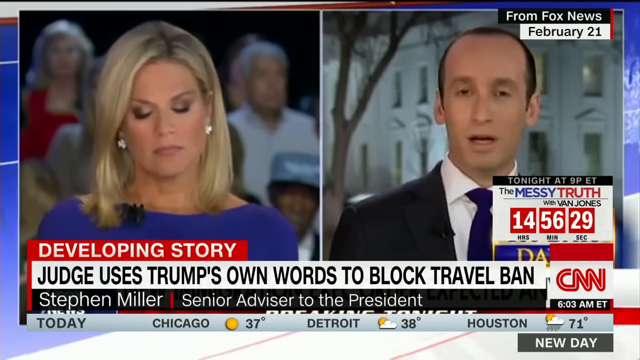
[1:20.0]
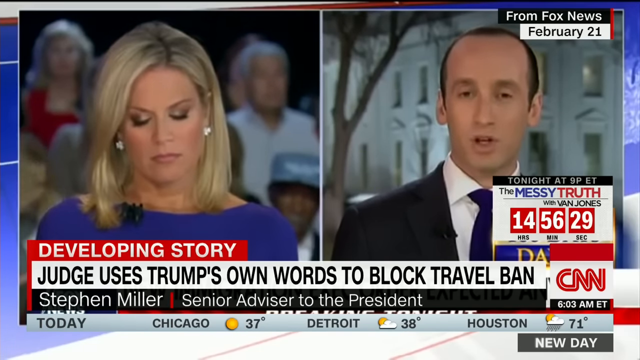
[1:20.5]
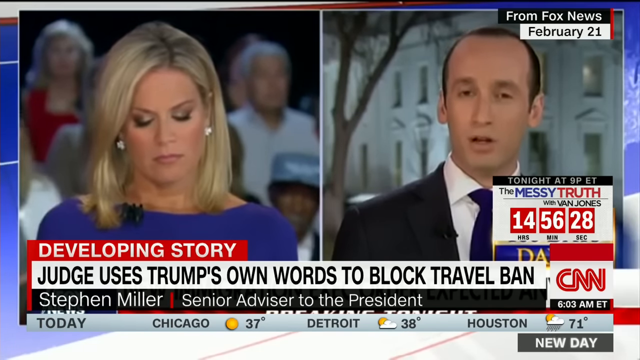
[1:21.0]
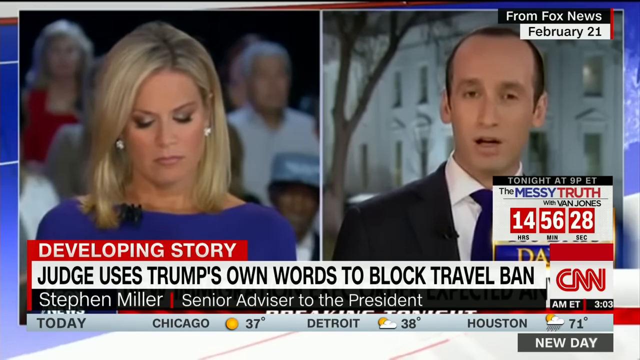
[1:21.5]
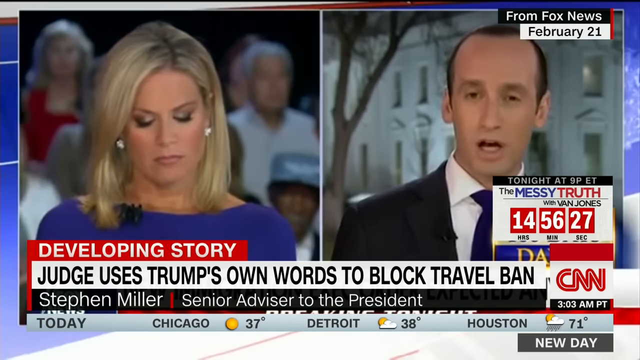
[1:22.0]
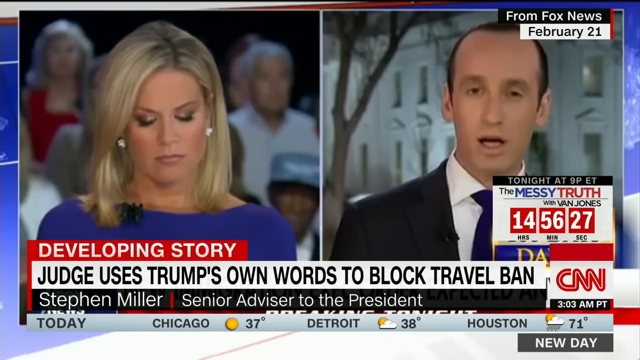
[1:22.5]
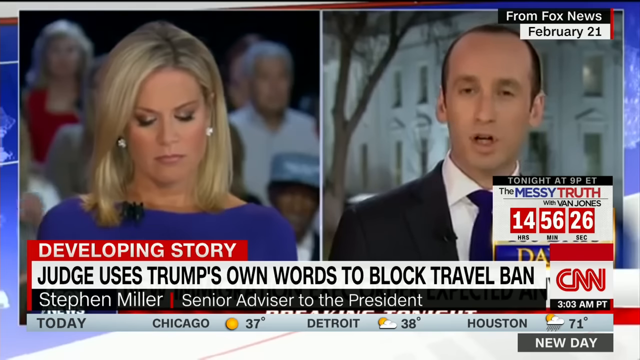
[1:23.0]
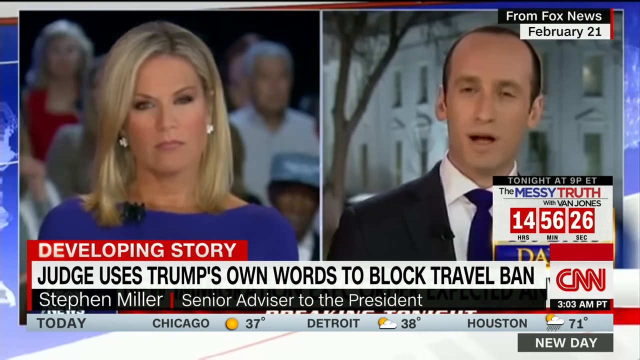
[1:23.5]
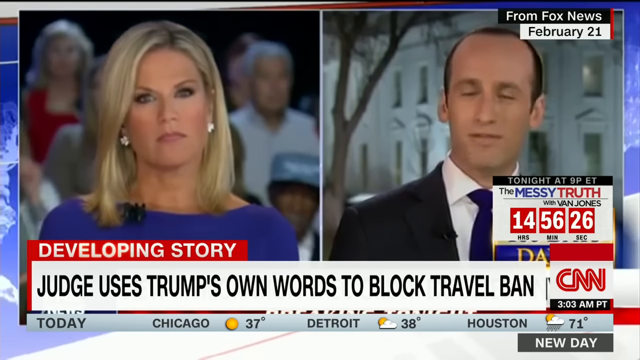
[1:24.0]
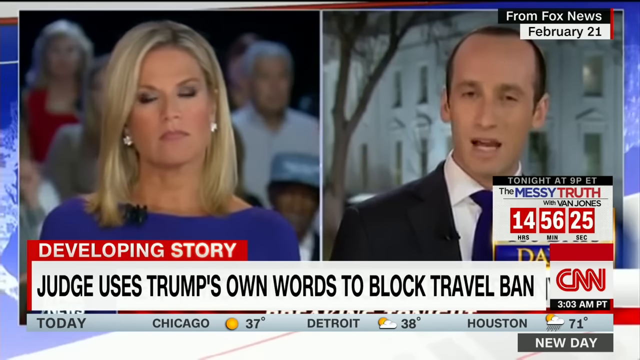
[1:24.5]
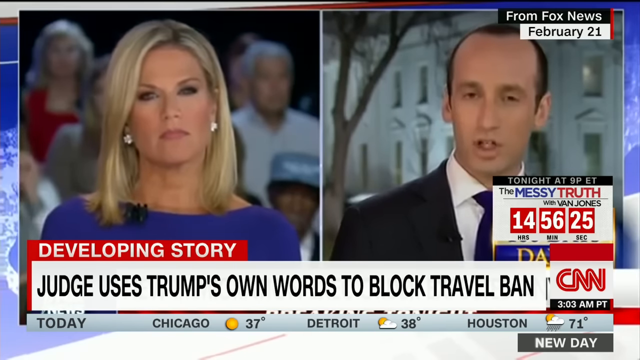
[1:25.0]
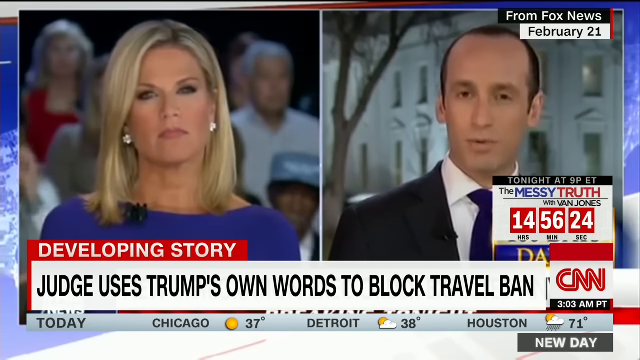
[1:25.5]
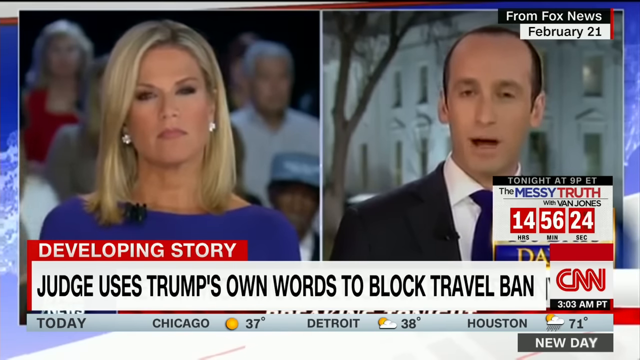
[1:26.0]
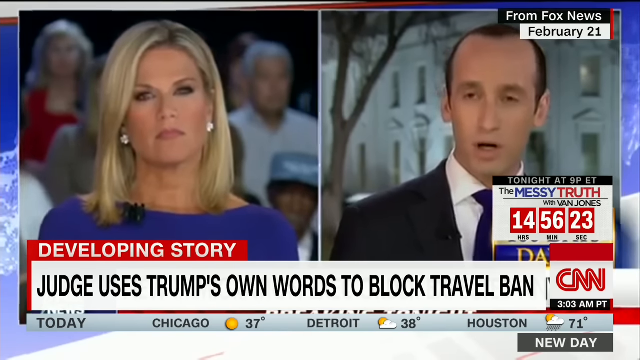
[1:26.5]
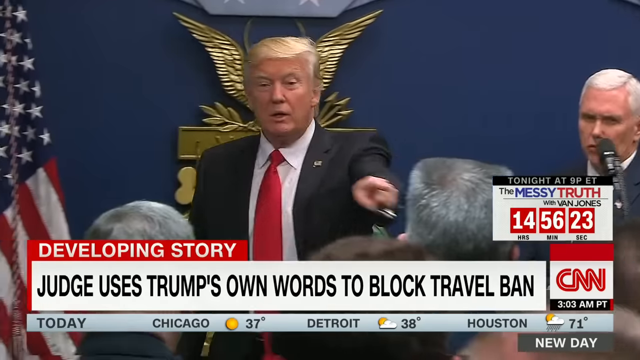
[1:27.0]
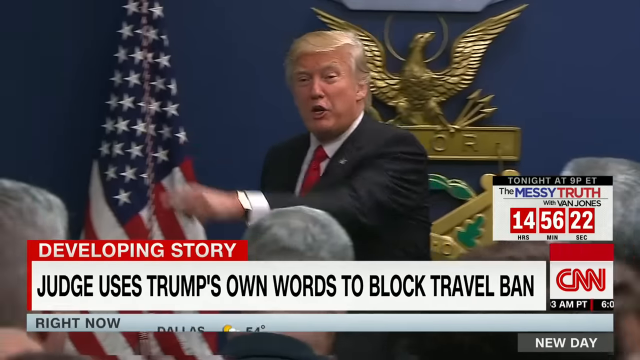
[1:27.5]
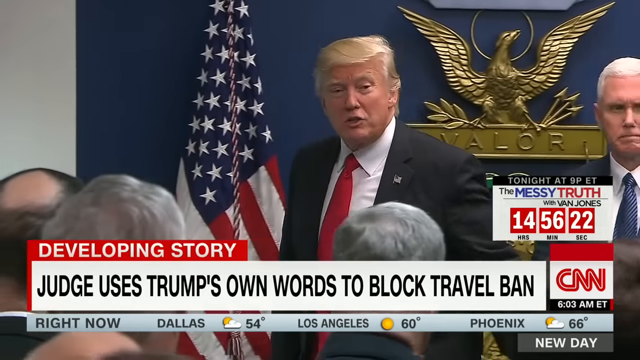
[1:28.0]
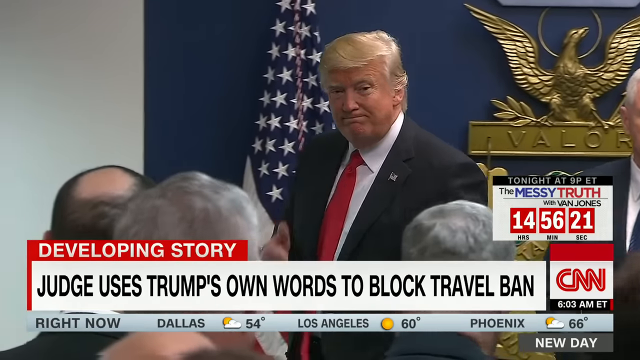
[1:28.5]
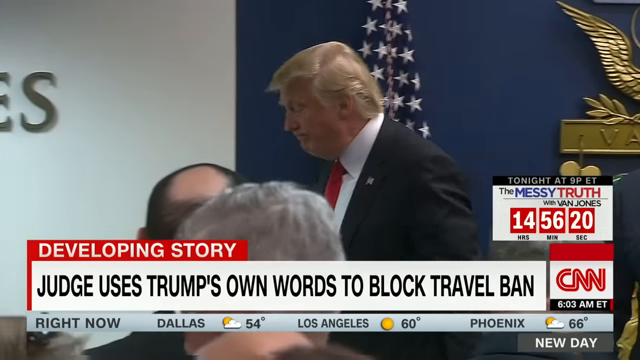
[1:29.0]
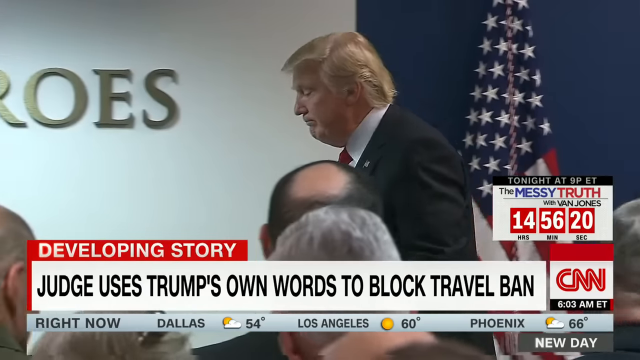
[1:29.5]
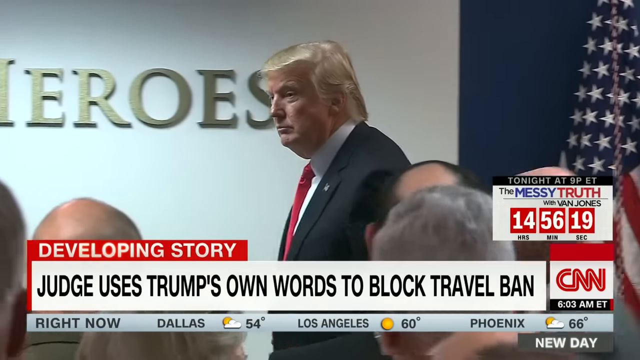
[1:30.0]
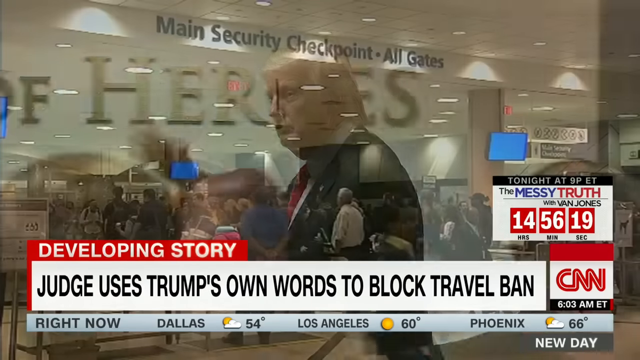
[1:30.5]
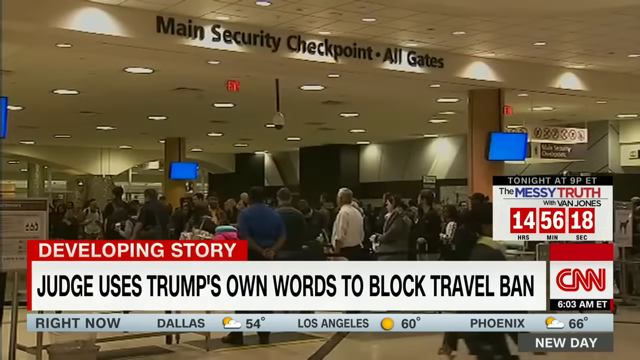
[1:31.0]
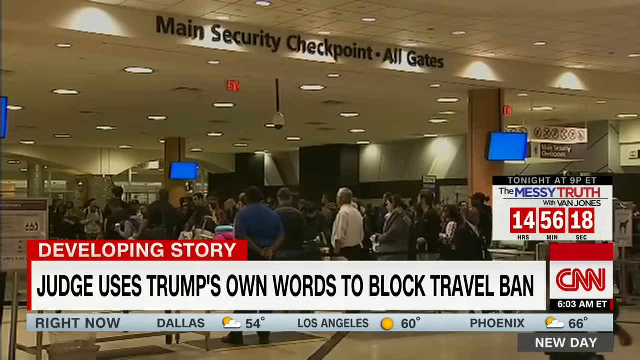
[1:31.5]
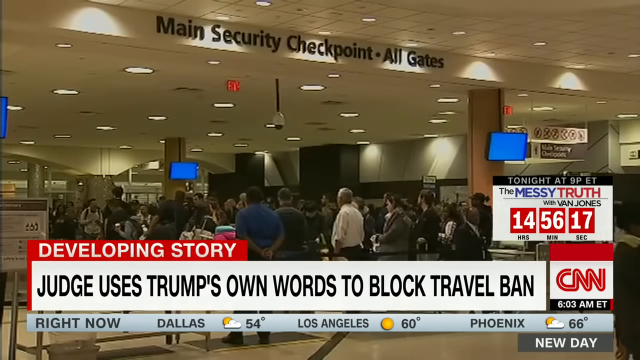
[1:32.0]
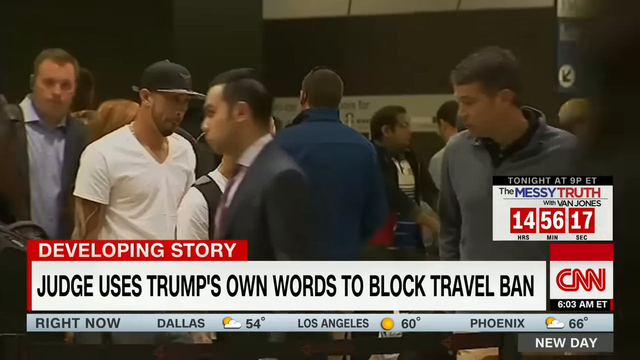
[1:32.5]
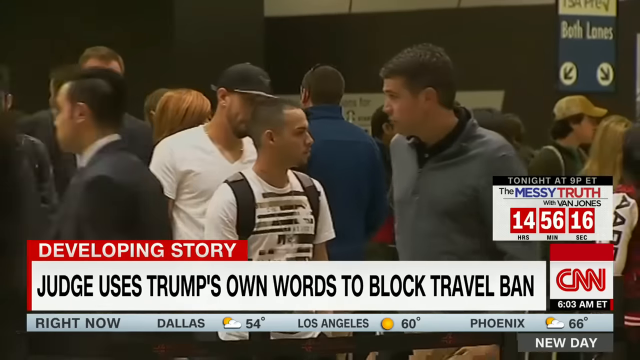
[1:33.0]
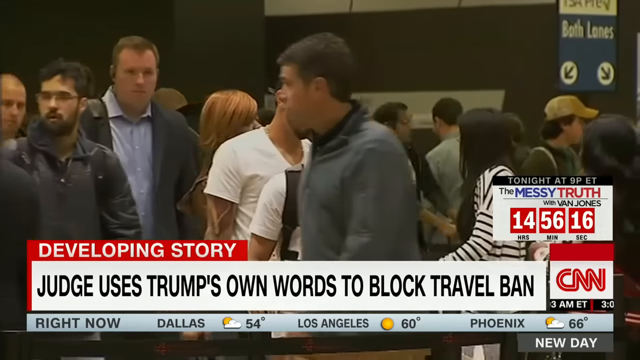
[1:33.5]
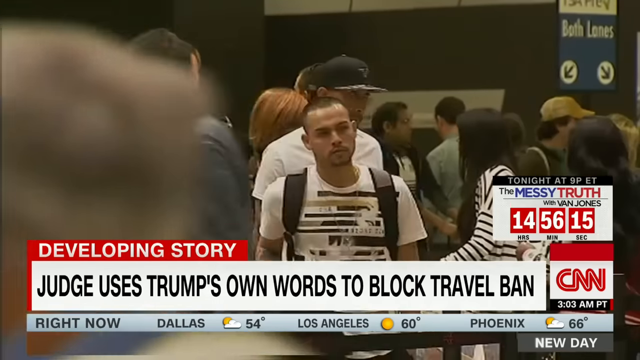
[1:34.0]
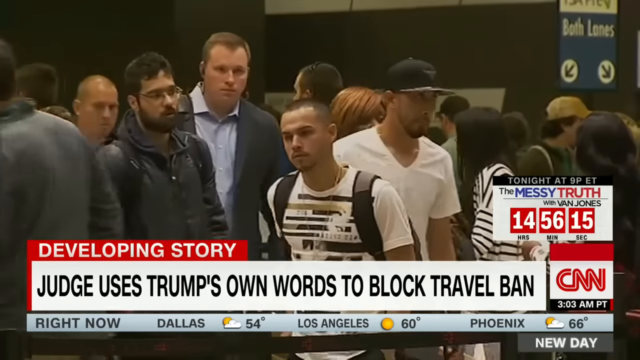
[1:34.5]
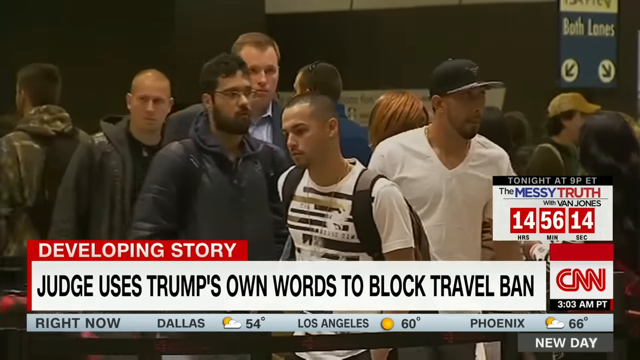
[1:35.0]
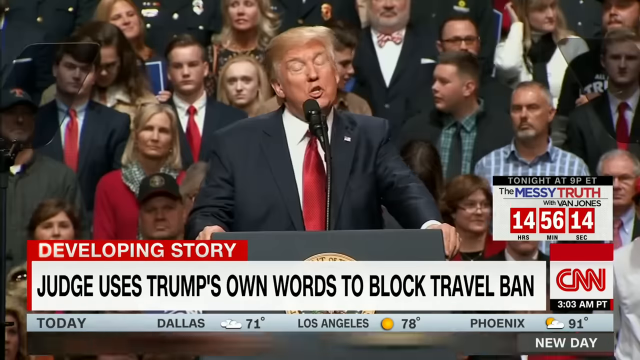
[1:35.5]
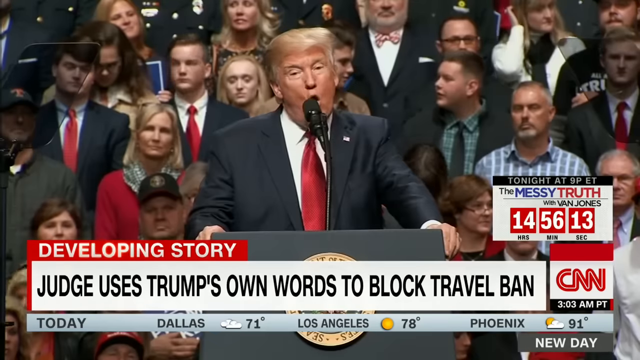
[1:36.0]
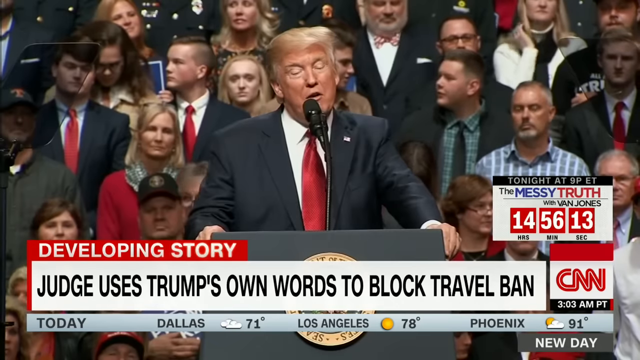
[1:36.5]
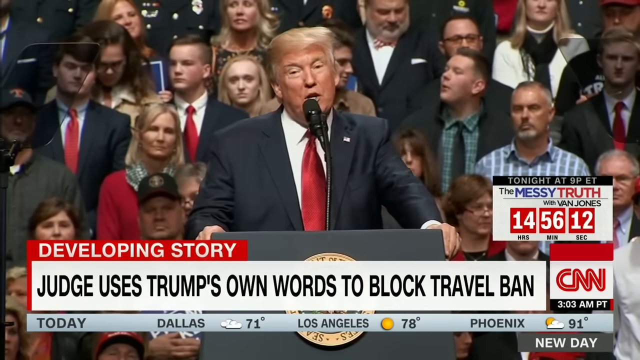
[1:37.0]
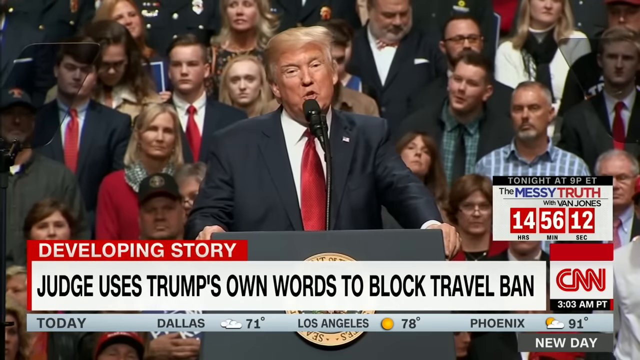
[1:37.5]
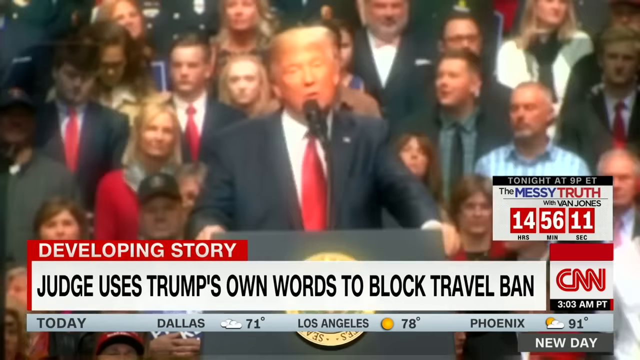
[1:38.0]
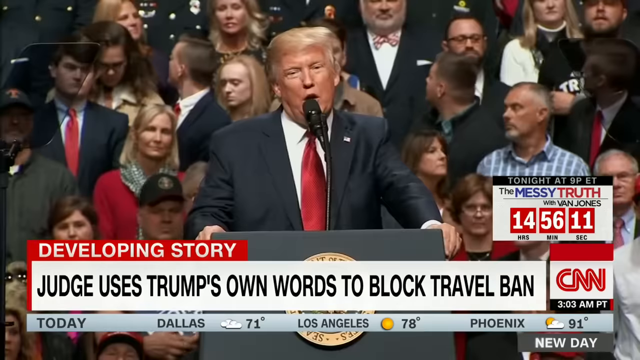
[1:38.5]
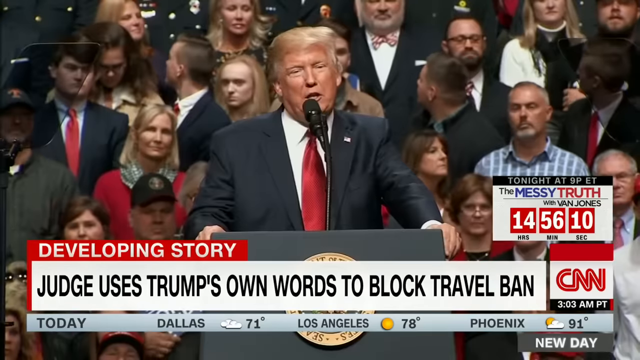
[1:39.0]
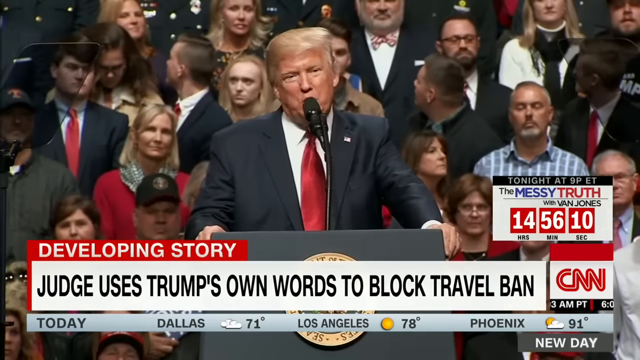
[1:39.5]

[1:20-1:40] The CNN story about Donald Trump's travel ban continues to show the Fox interview with Stephen Miller, along with clips of Rudy Giuliani. After the clips of Stephen Miller and Donald Trump, the story shows B-roll footage of people milling about in airports.